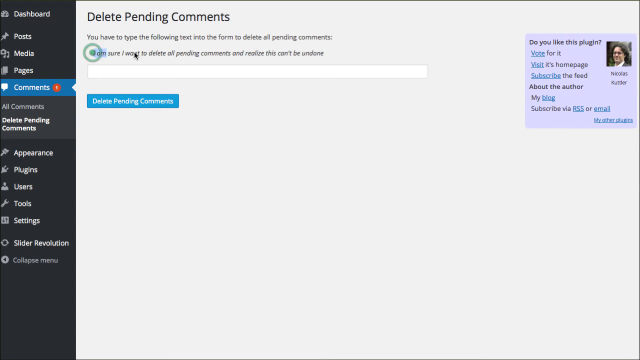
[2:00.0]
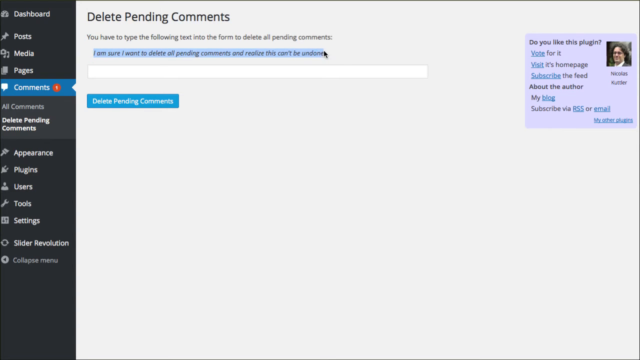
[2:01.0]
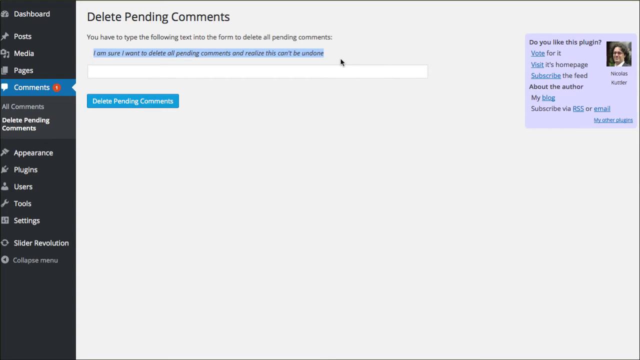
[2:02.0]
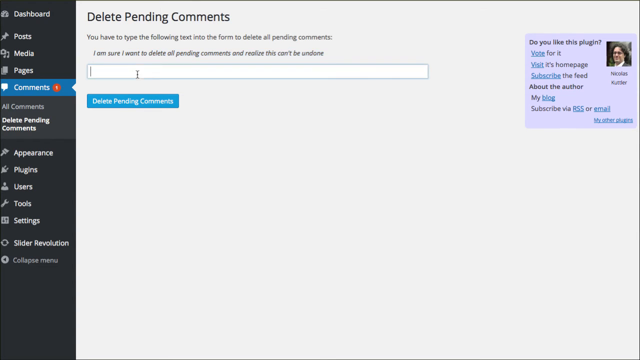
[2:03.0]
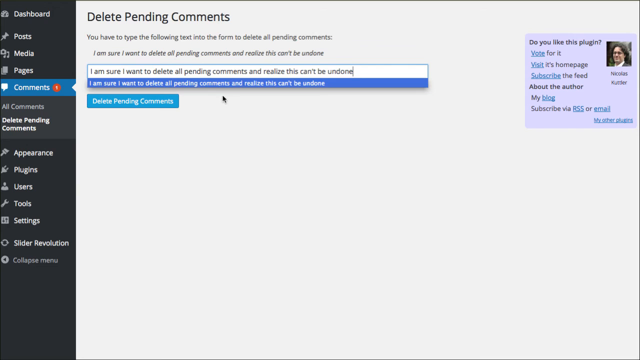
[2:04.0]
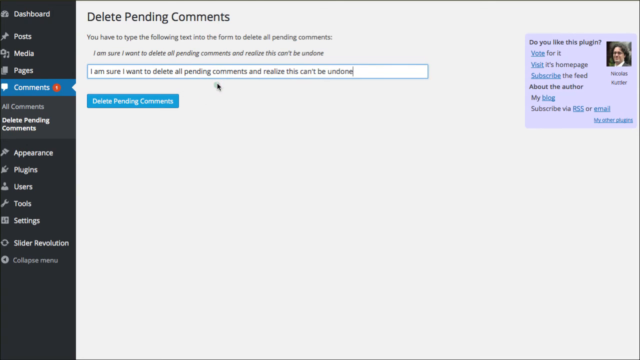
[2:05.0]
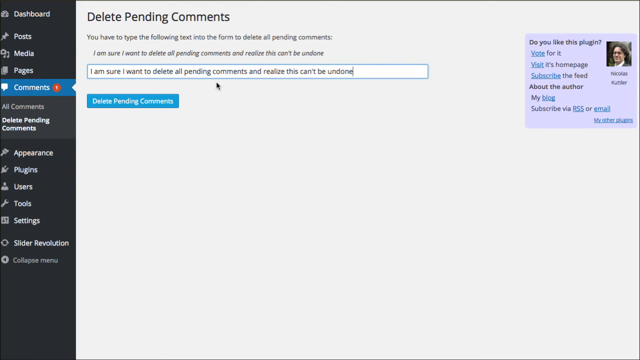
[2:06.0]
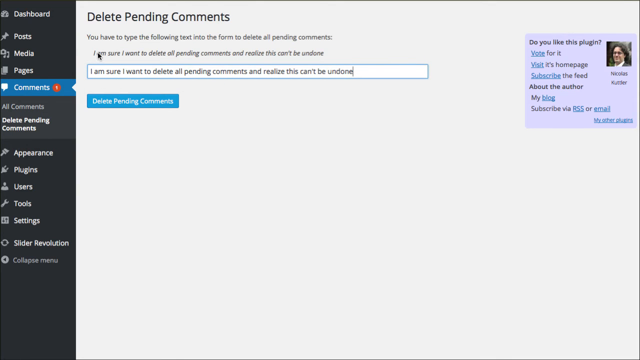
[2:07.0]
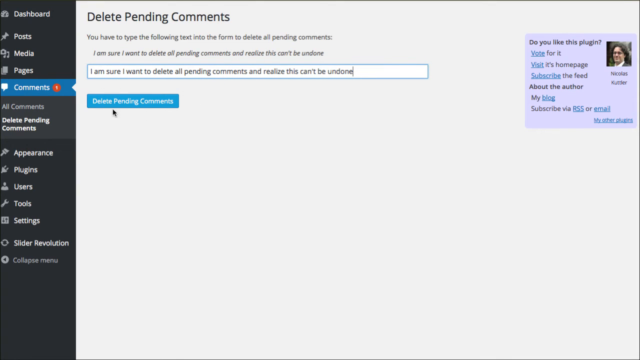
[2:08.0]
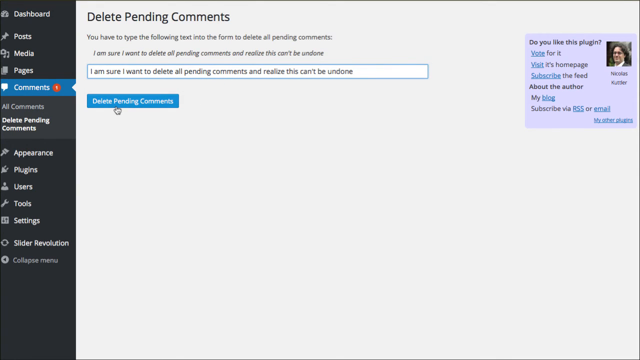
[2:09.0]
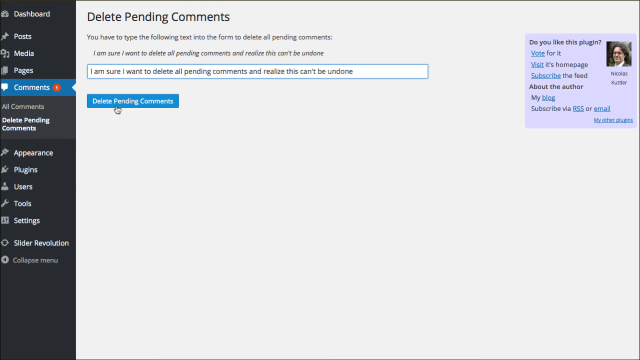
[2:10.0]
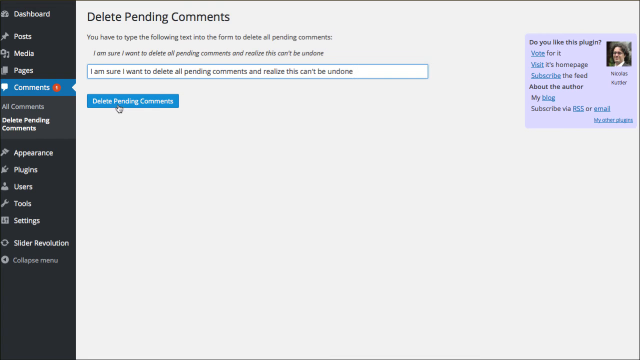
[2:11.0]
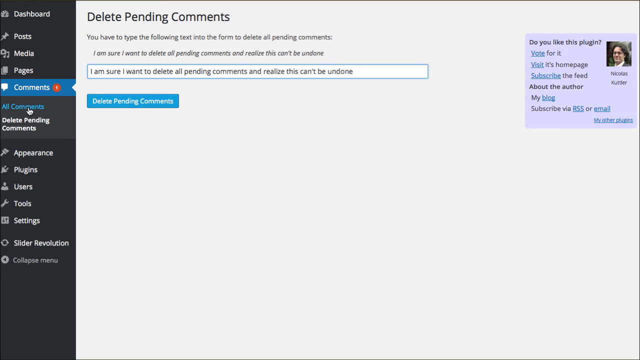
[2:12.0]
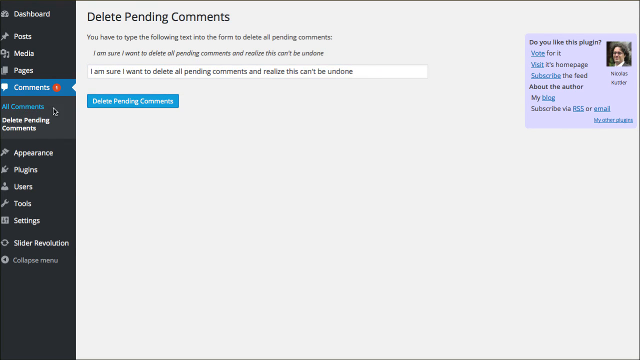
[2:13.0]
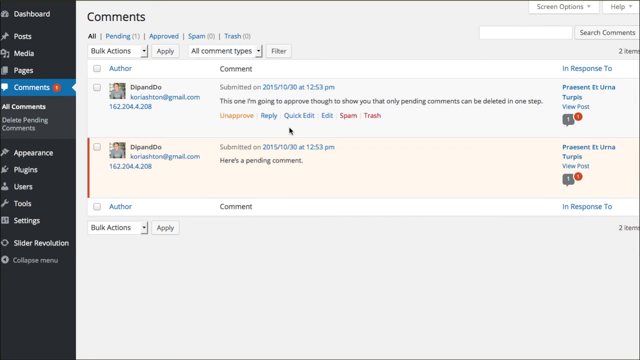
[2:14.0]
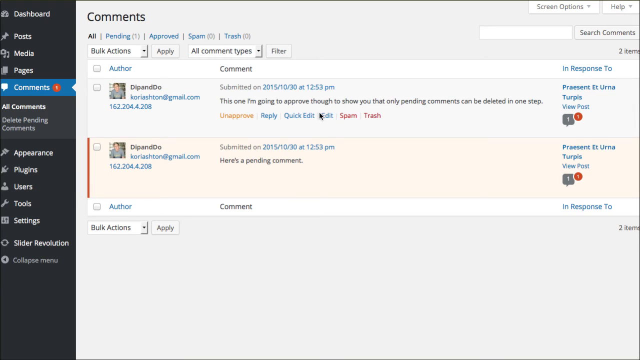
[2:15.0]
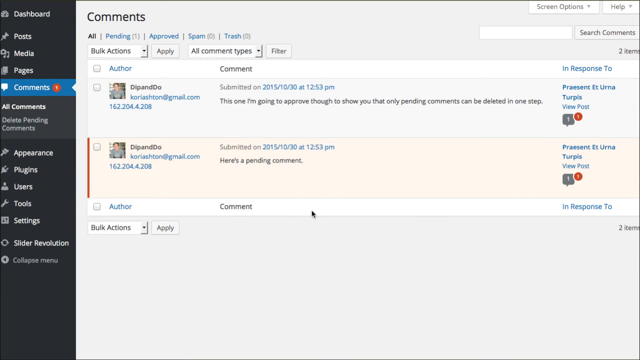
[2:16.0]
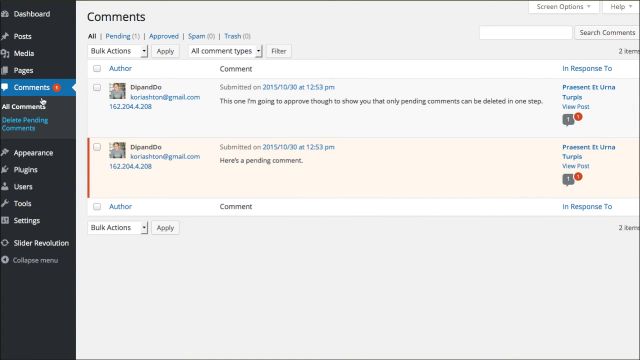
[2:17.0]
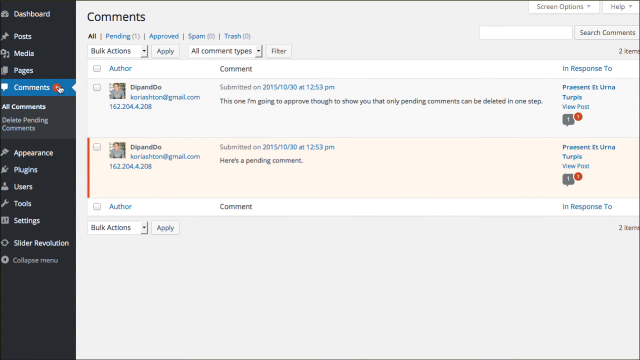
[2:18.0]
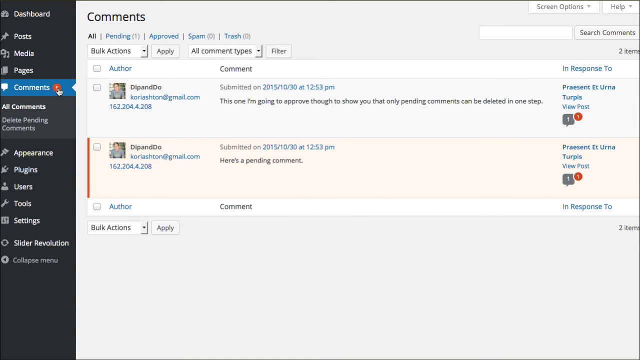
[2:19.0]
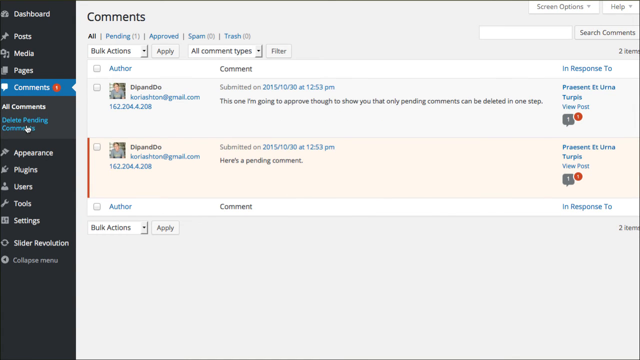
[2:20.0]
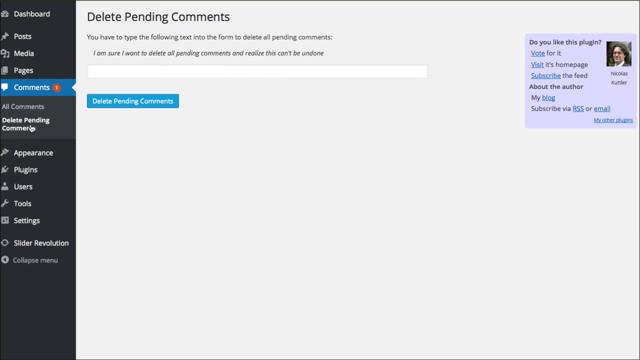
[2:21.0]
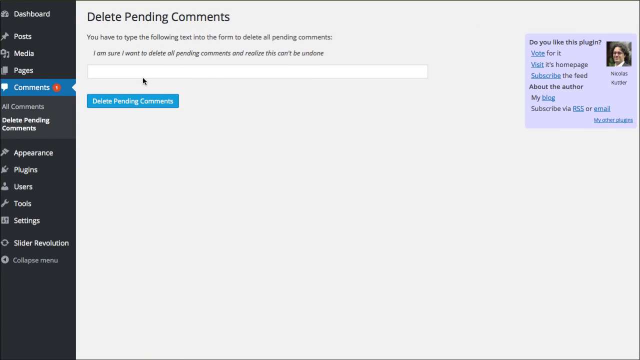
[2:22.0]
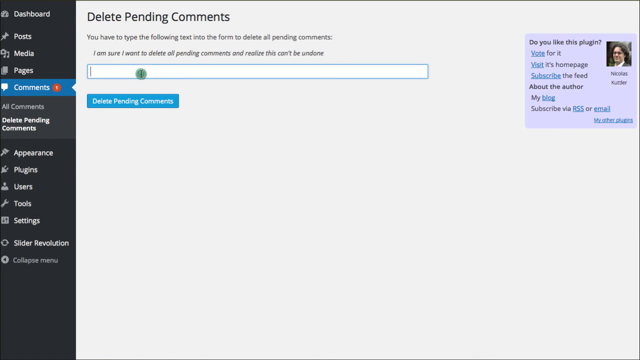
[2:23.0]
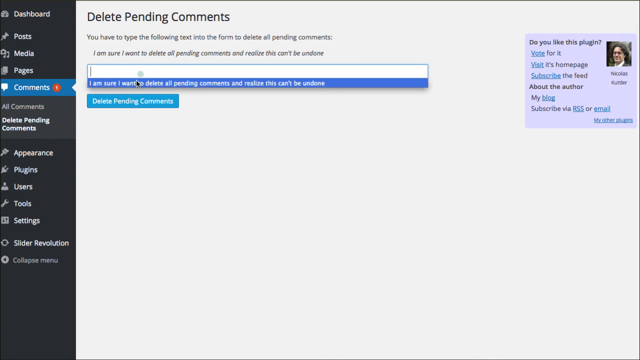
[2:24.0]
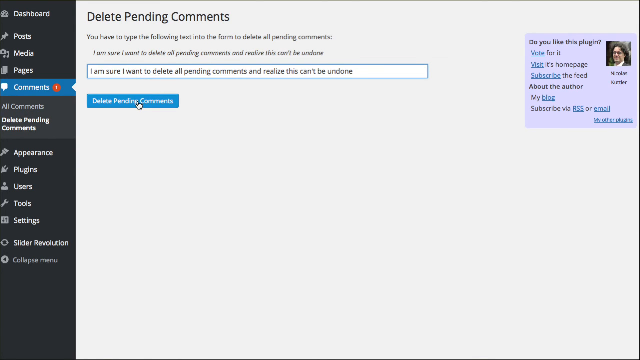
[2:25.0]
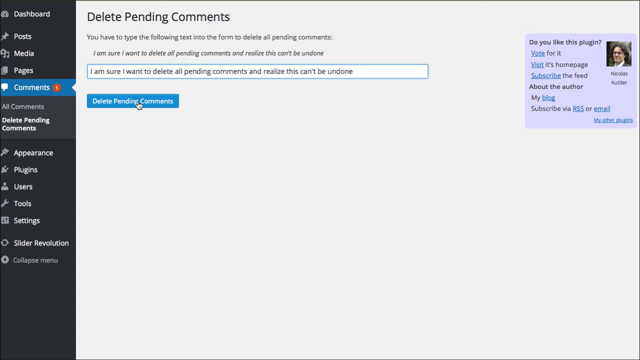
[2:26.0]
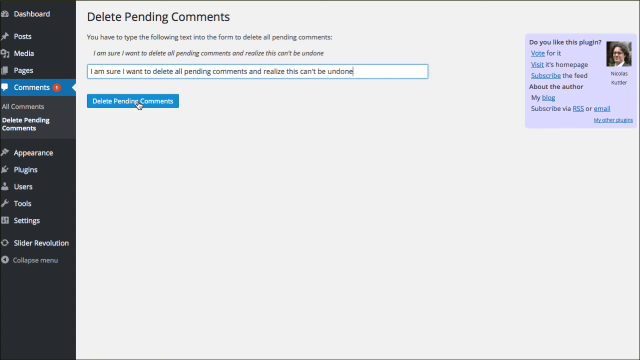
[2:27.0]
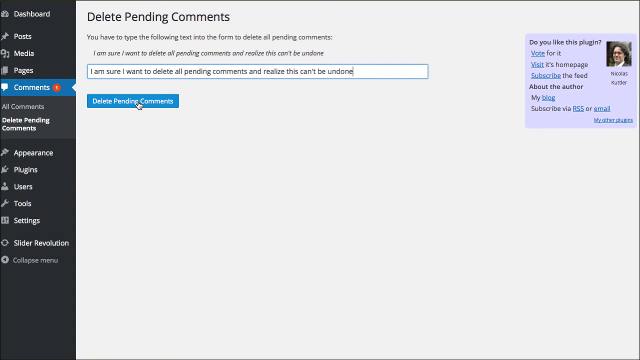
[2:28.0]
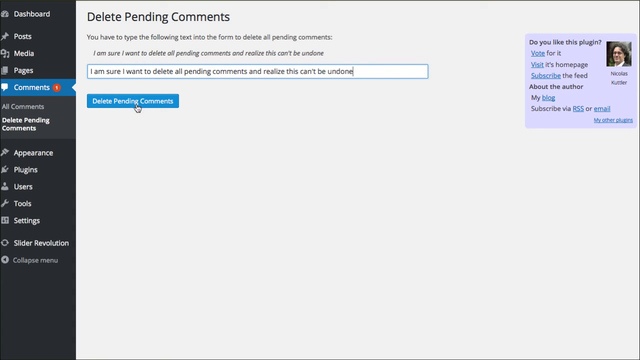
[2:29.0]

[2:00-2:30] In the deleting pending comments section, the user drags the mouse from left to right over the text "I am sure I want to delete all pending comments and realize this can't be undone", highlighting it in light blue. They click on the textbox underneath, paste the same text into it, and click the blue "delete pending comments" button. They then select the All Comments button from the dashboard, showing that there are pending comments. They click on delete pending comments again, paste the highlighted text back into the text box, and click the blue delete pending comments button.